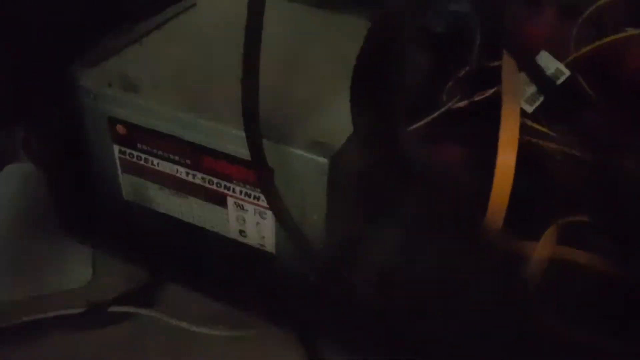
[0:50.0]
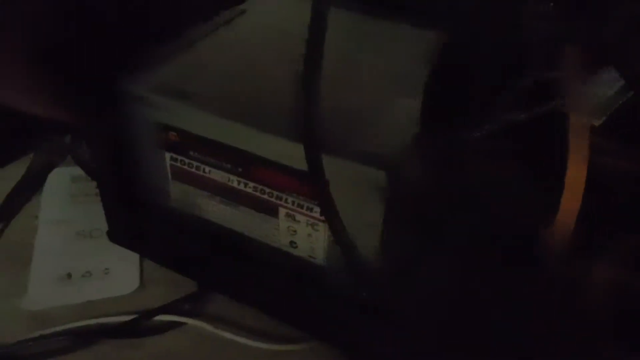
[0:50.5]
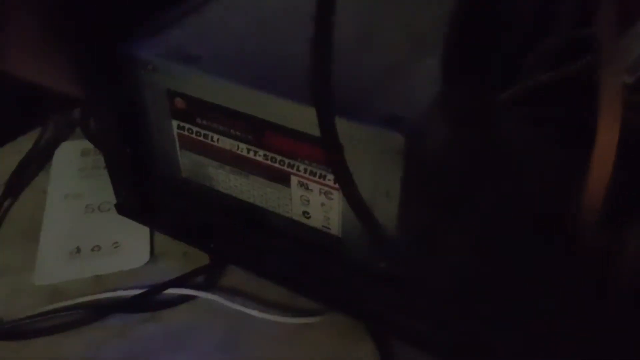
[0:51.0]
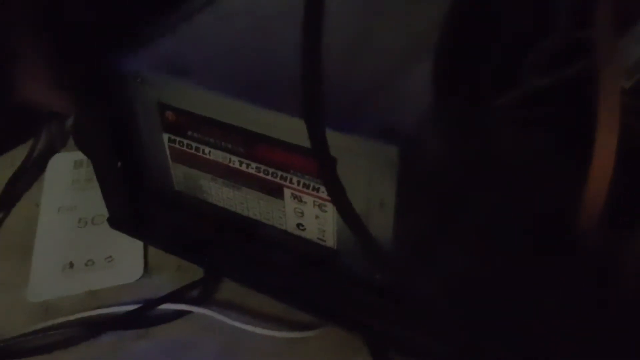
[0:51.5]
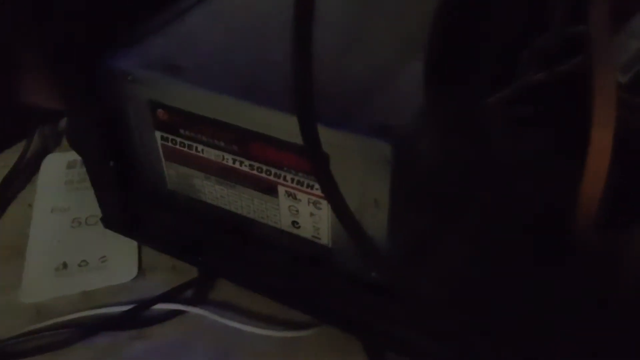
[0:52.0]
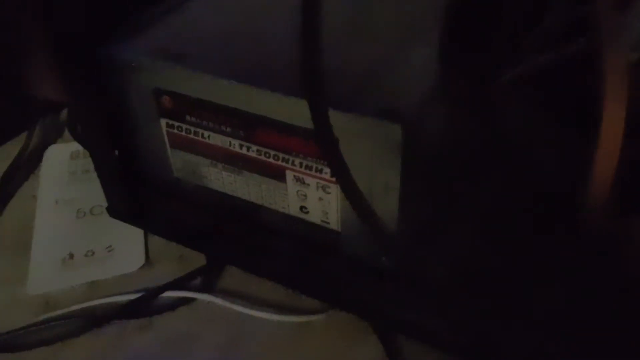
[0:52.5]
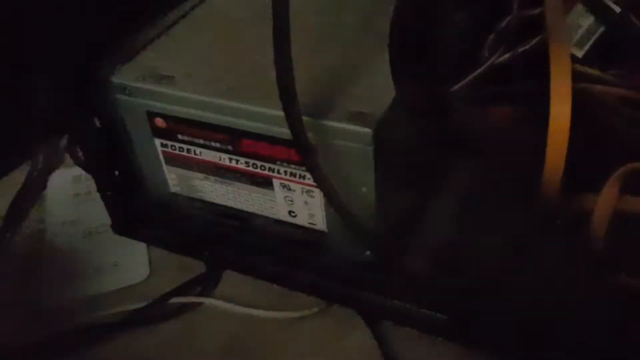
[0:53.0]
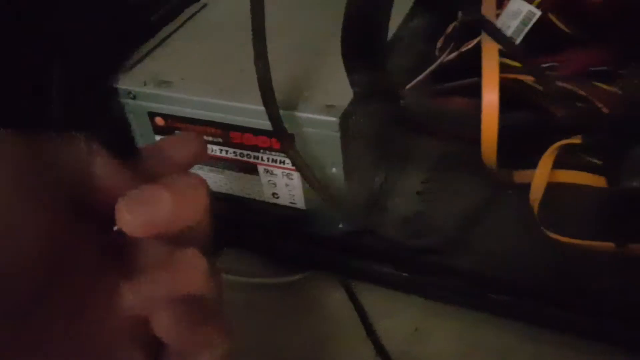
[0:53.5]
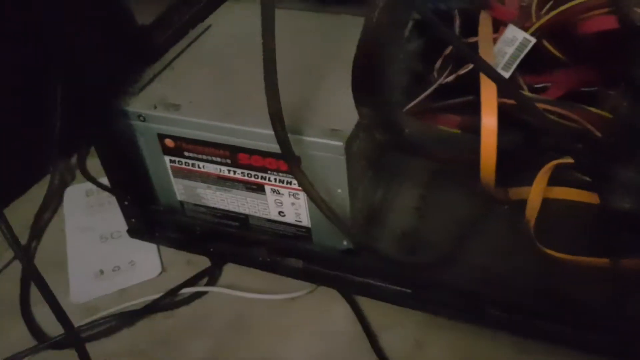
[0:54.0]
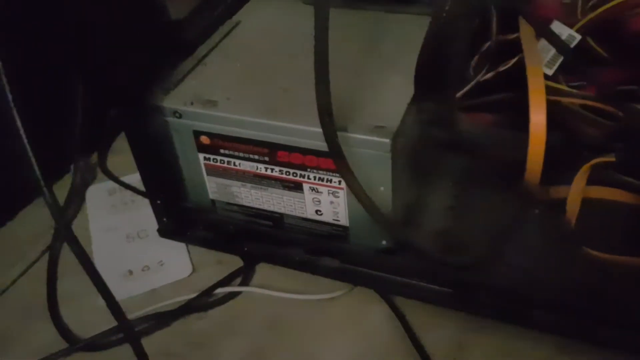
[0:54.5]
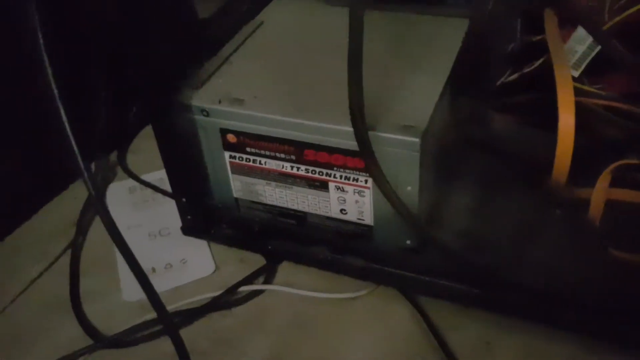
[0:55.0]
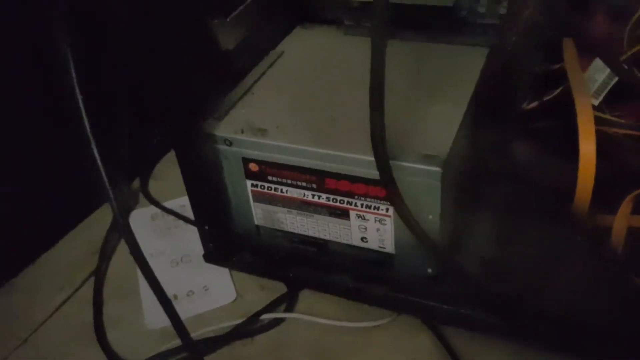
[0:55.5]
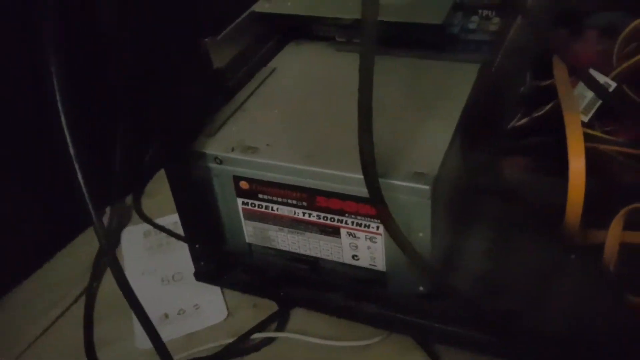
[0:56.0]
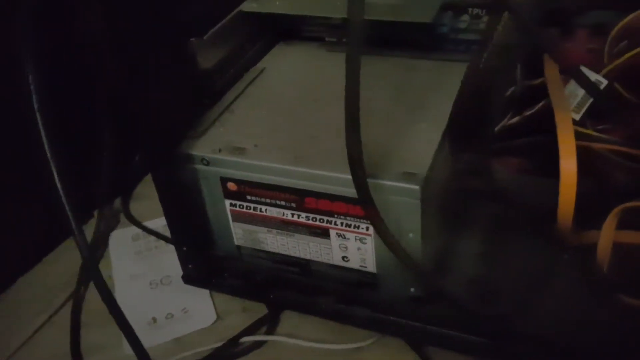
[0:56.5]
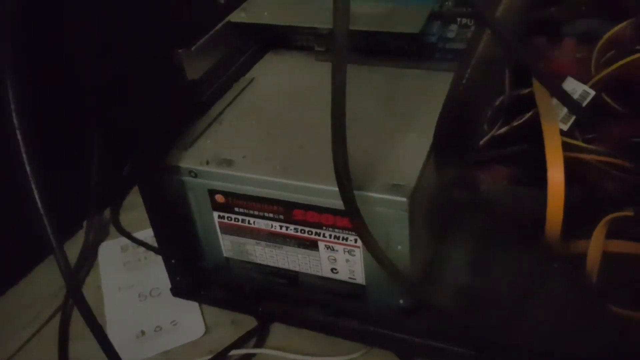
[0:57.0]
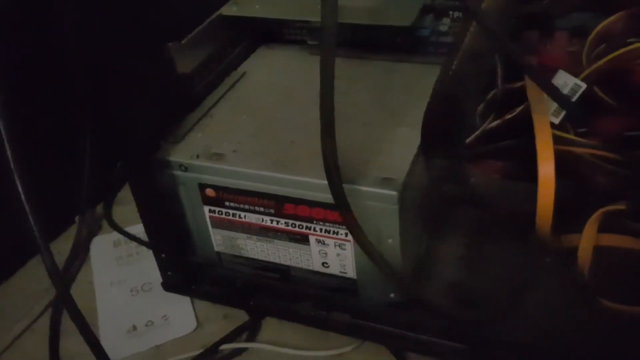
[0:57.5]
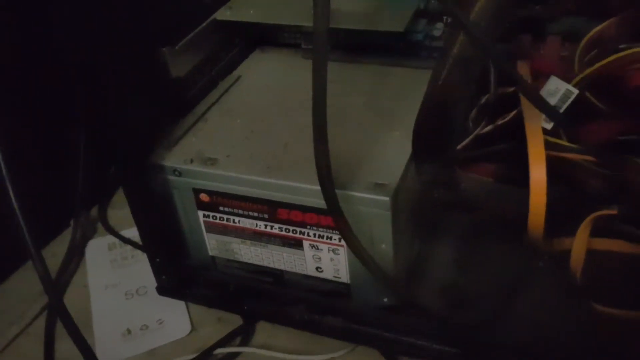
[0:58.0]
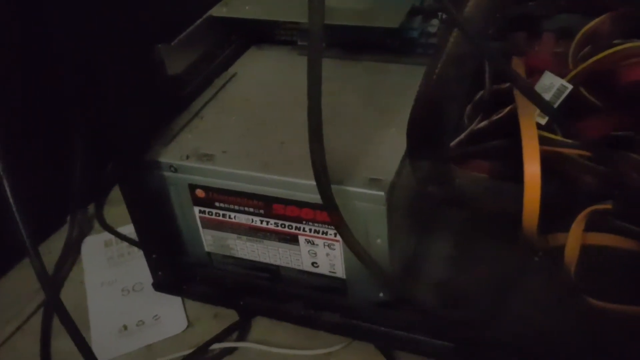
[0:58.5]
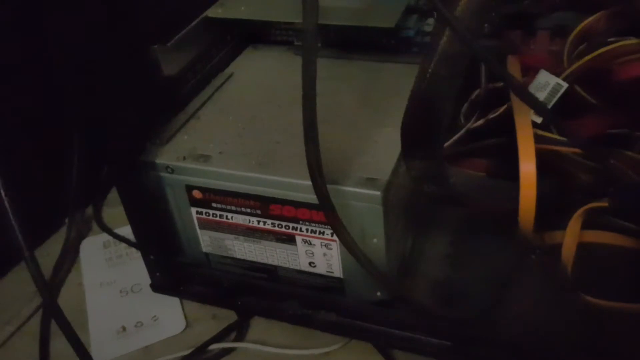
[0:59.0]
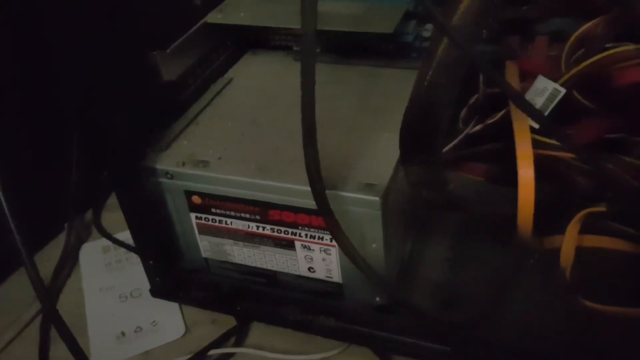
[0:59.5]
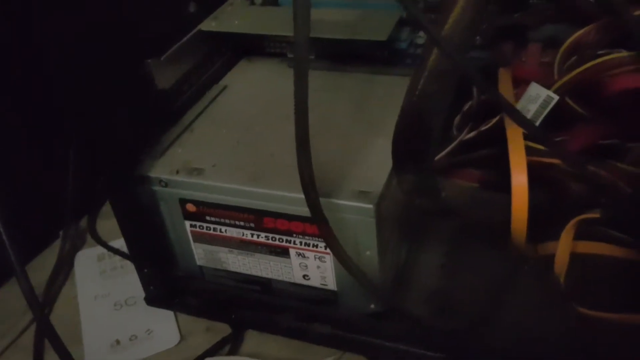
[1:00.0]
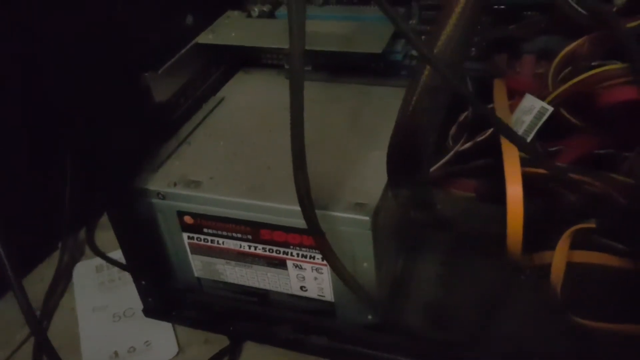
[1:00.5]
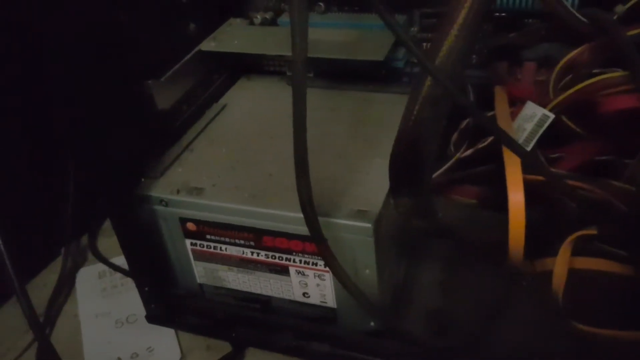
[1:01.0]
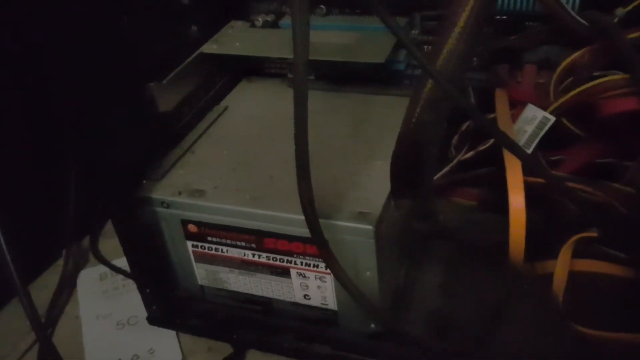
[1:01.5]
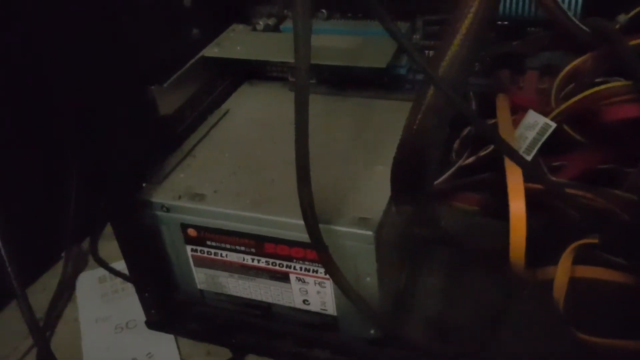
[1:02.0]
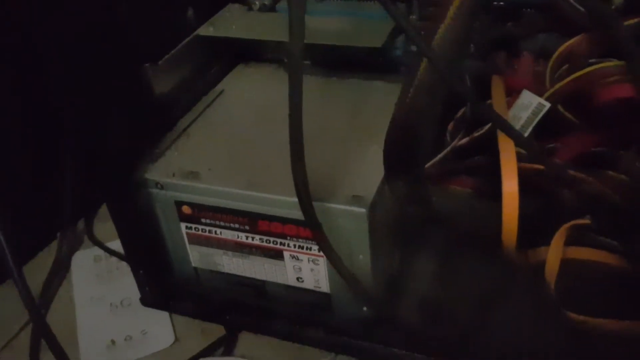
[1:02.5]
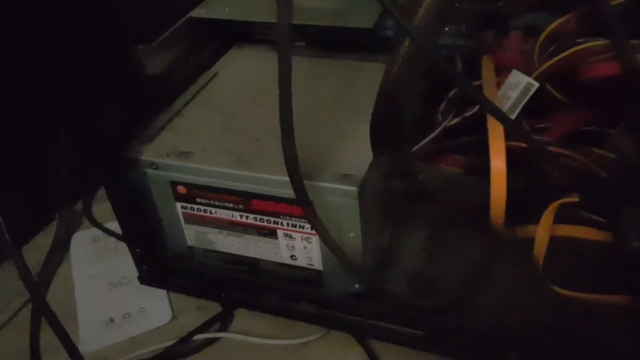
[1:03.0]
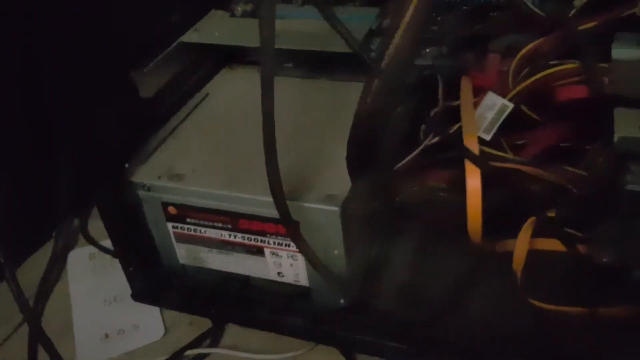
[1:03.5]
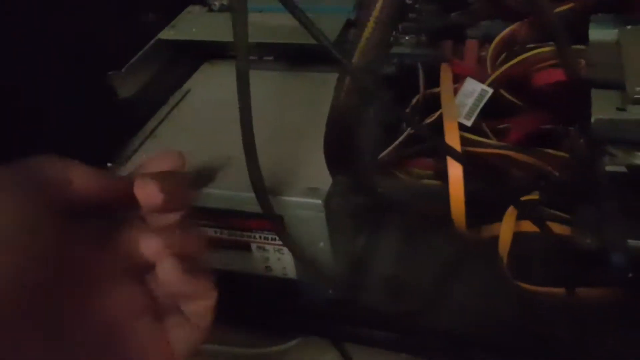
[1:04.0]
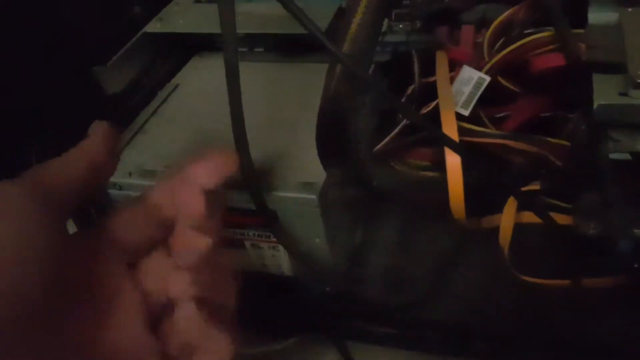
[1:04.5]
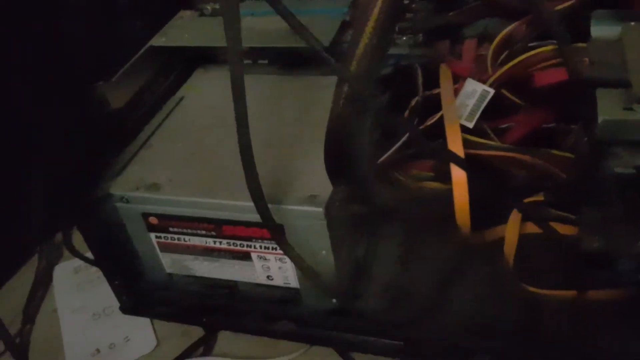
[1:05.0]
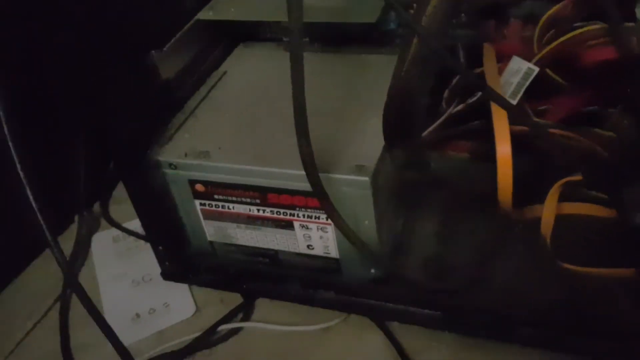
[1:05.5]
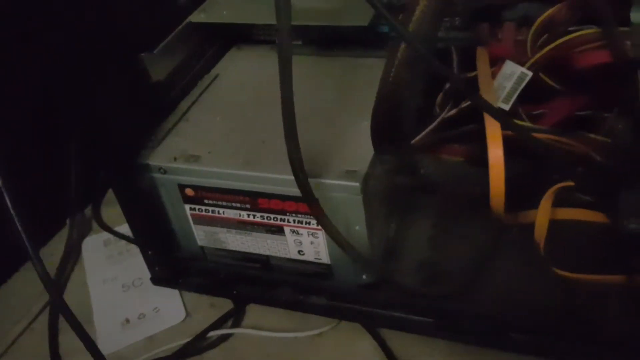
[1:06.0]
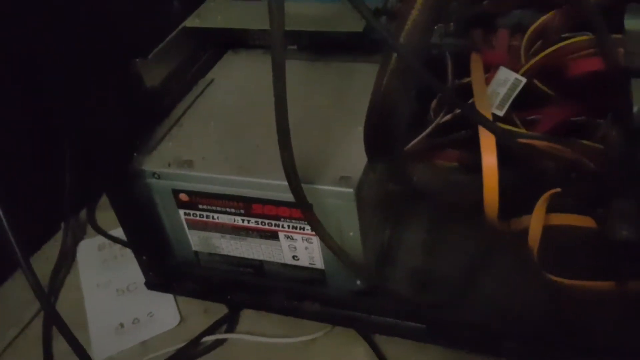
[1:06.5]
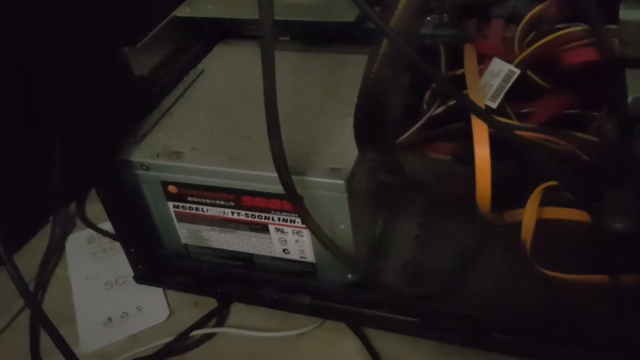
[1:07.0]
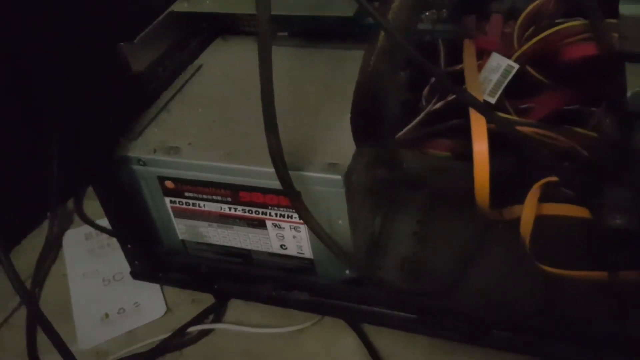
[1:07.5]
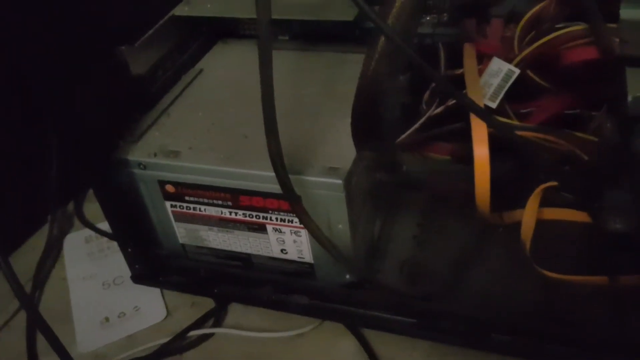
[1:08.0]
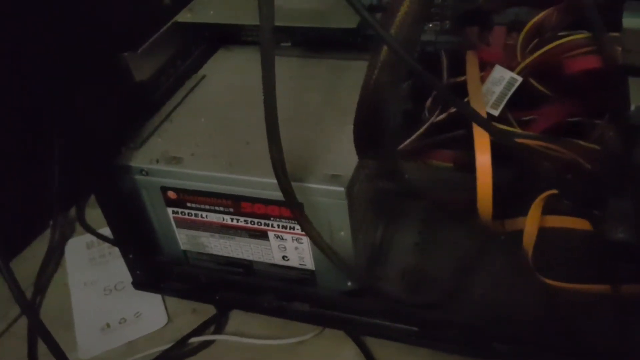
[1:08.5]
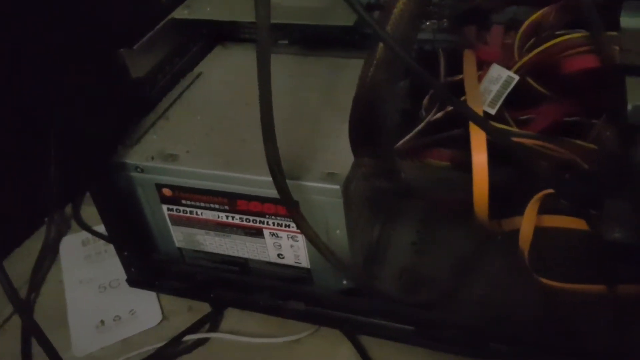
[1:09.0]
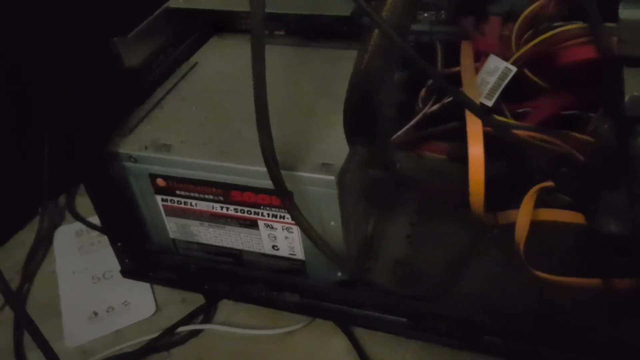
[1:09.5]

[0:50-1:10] A man's hand appears right in front of the hardware, a finger kind of pointing at it. The hand is fairly meaty. The IT cords are on the right-hand side. He touches the box, kind of pointing at it and hitting it with his left middle finger.